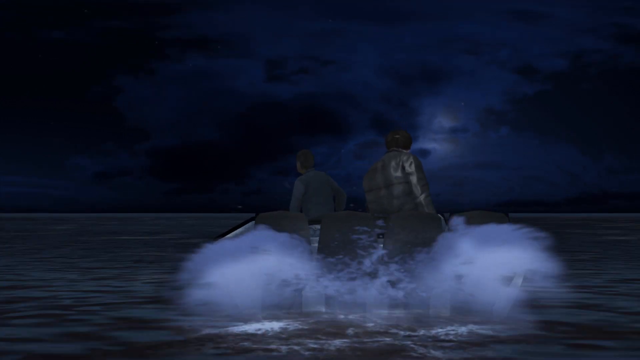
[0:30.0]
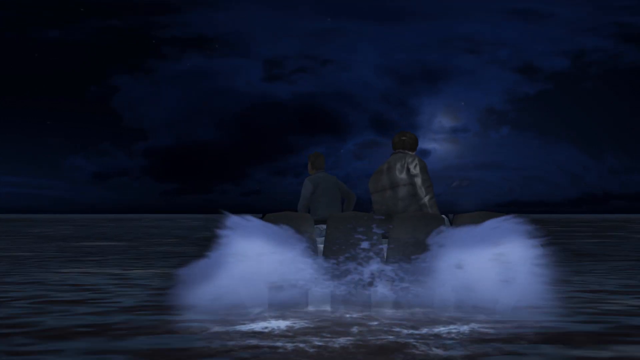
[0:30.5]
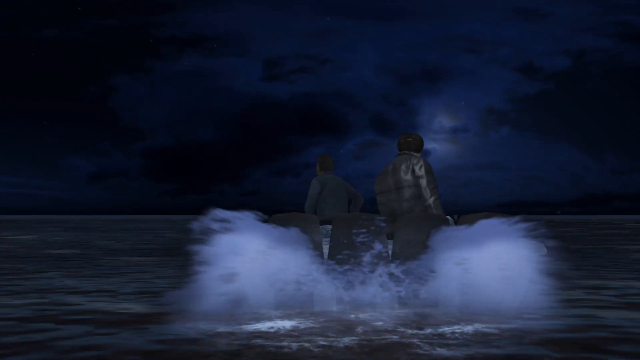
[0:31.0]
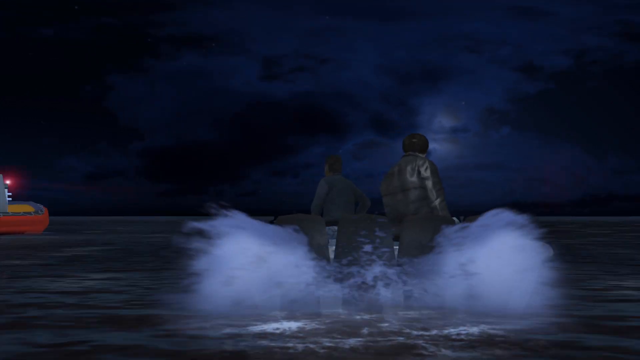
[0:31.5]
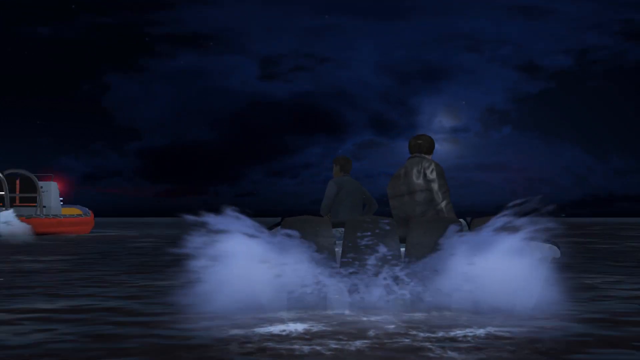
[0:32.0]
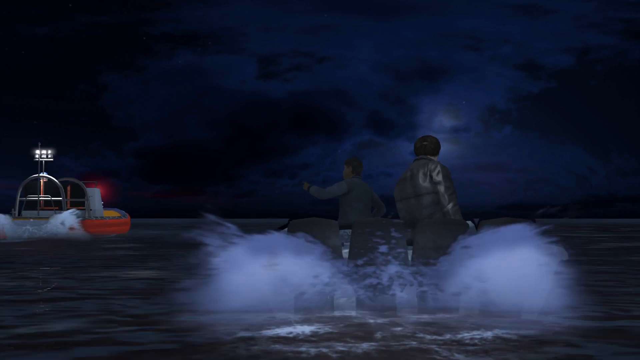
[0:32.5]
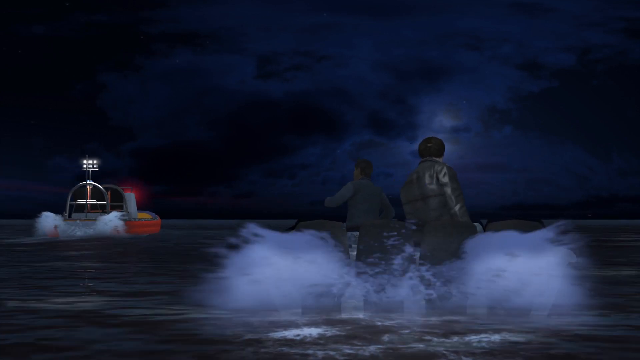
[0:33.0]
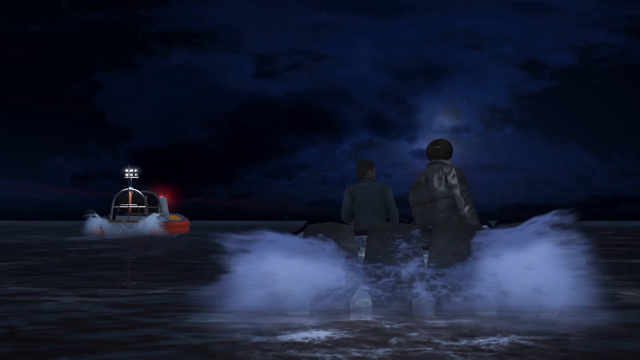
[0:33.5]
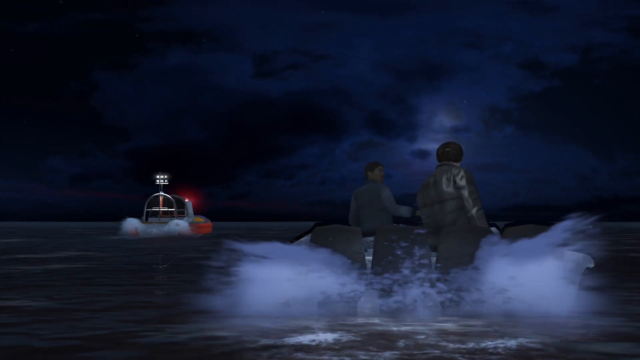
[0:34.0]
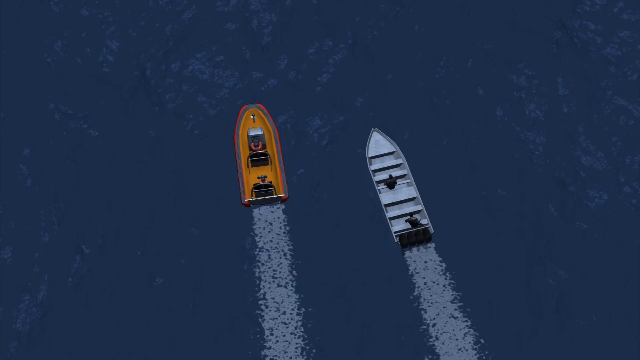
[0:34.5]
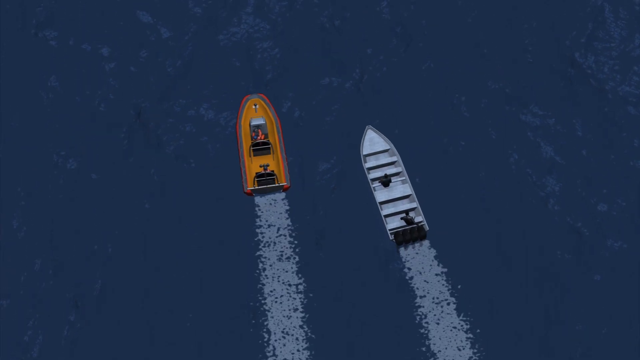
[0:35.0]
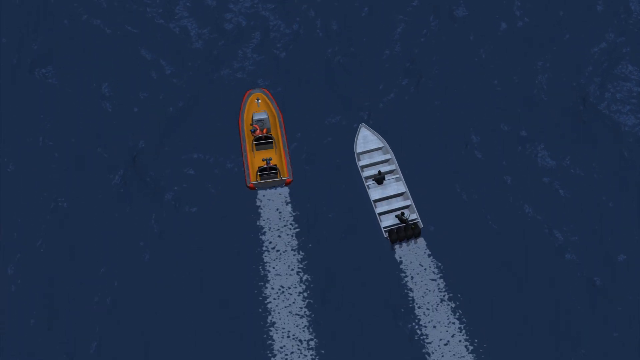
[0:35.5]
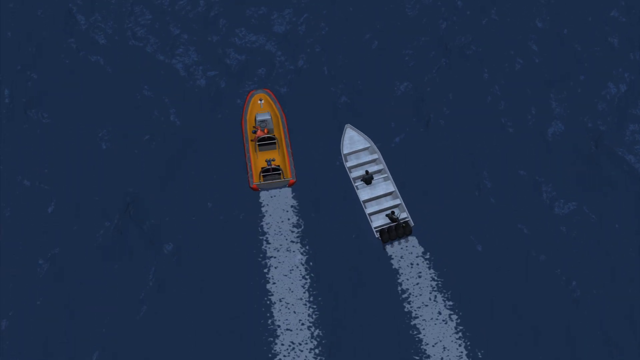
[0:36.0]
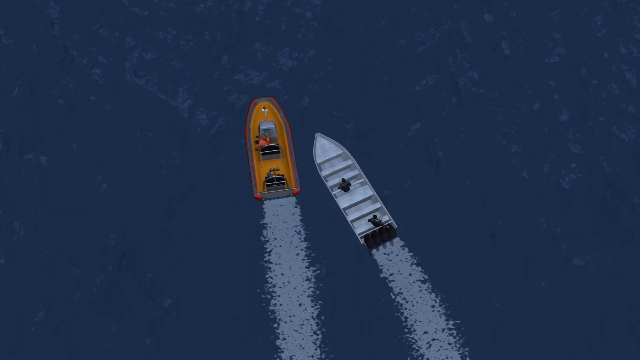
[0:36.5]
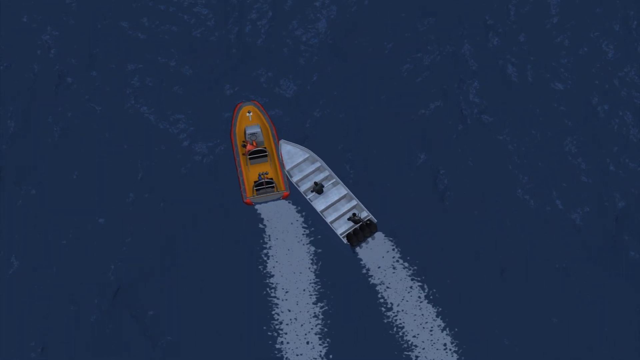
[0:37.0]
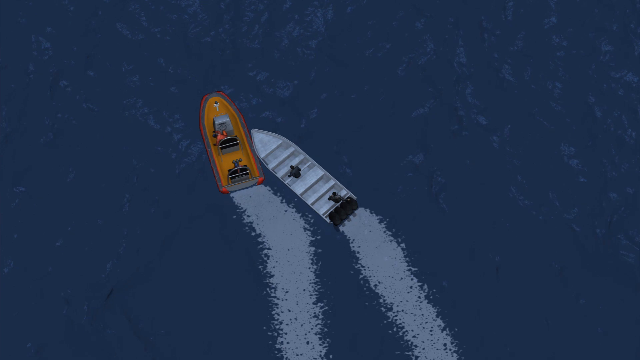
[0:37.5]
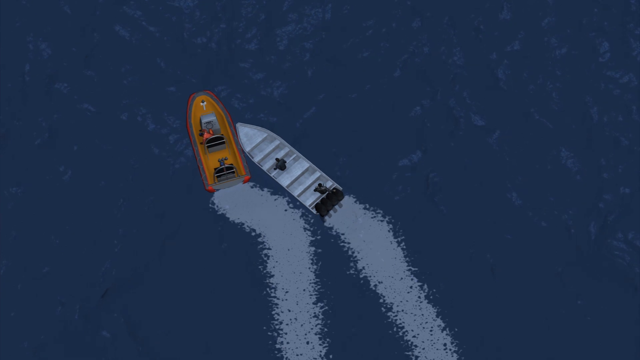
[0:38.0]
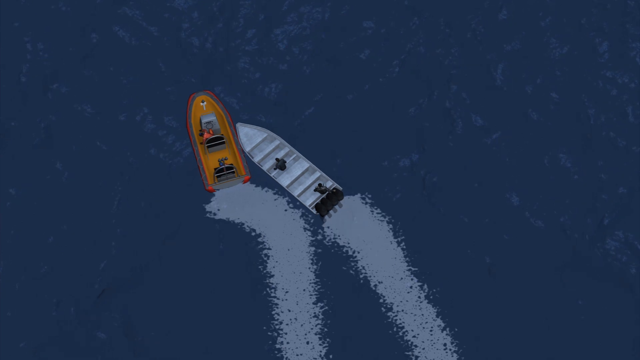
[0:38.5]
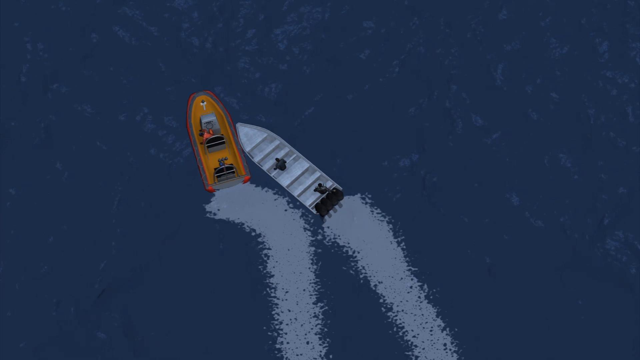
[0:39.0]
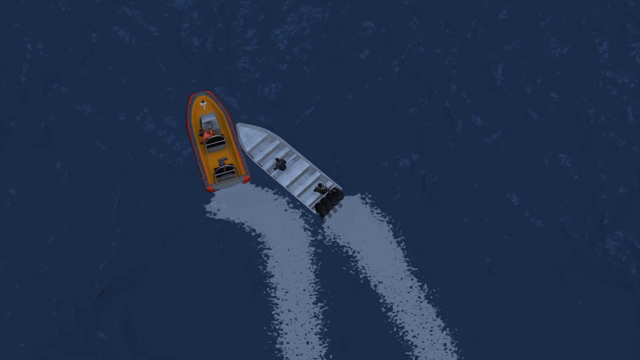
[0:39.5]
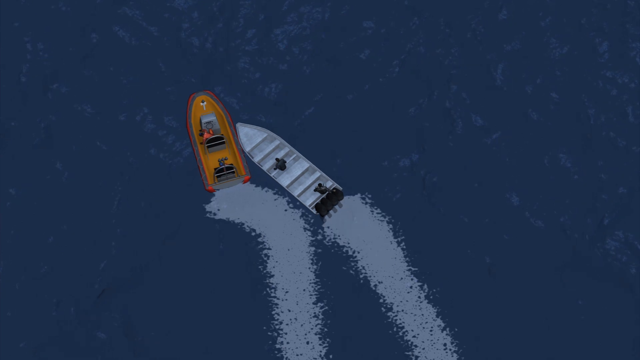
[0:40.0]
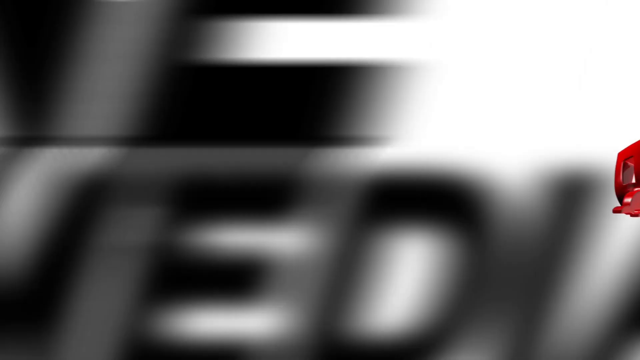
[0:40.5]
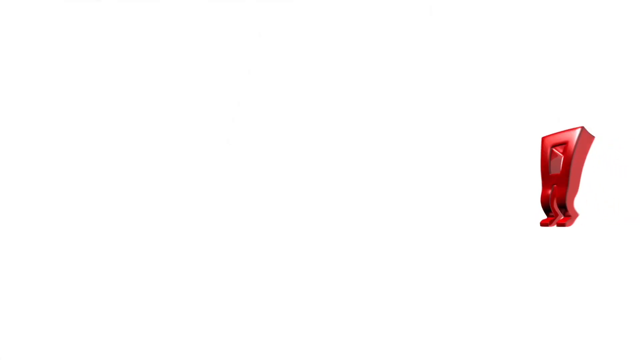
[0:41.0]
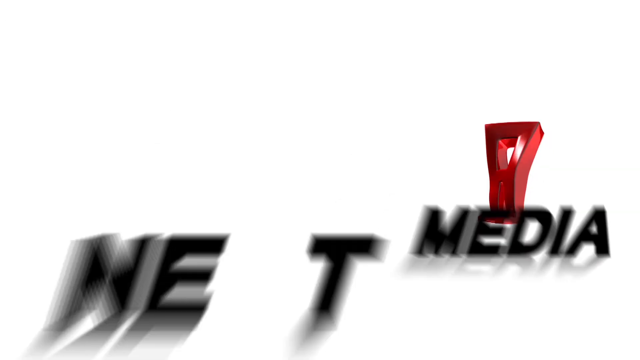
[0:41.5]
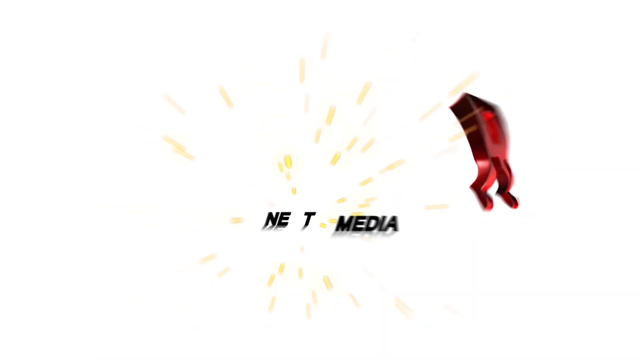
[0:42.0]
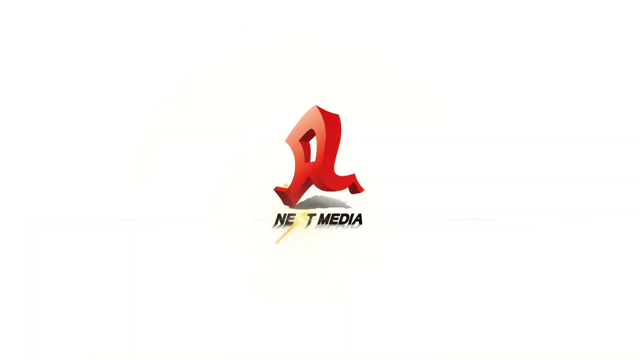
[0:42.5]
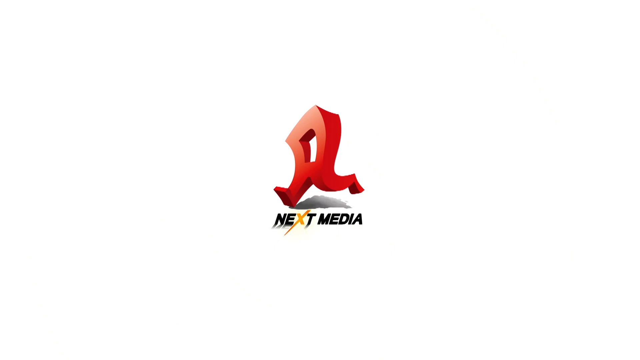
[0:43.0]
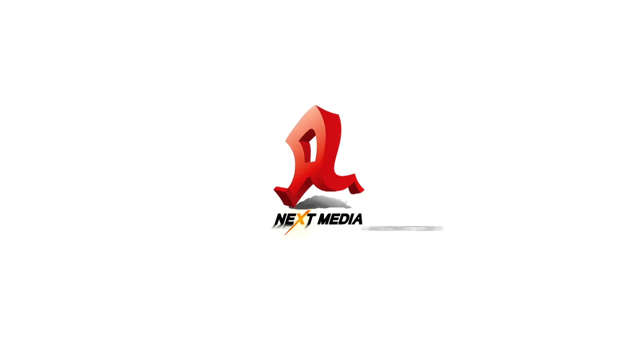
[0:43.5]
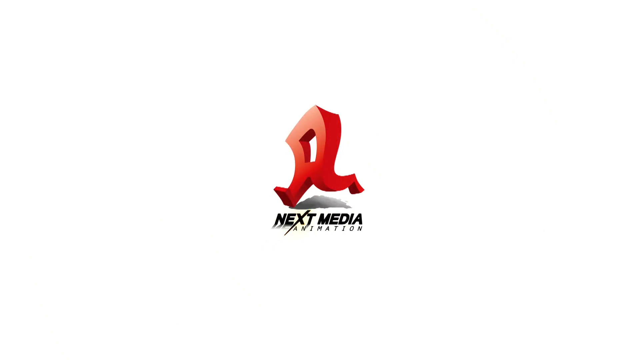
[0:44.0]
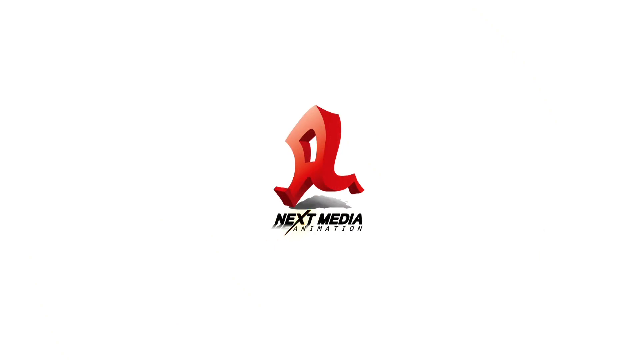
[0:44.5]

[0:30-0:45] Two men in black jackets ride in a small boat with an outboard motor. The video is in CGI that looks like it comes from the late 90s or early 2000s; it is rendered but without much detail, and everything looks a little smooth. It is nighttime, and the sky is blue and cloudy. As the men move through the water, the small orange boat that came off a larger ship earlier enters on the left side of the screen with its lights on. An overhead shot shows the two boats, with the orange one a little ahead and to the left. The white boat moves and collides with the orange boat, its tip or front striking the orange boat's side. The screen goes white, and a red square character with legs appears, looking like a mascot, as text flies onto the screen reading "next media animation". The X is stylized, with its bottom left and top right arms stretched out a little, and the little red character runs above the logo.